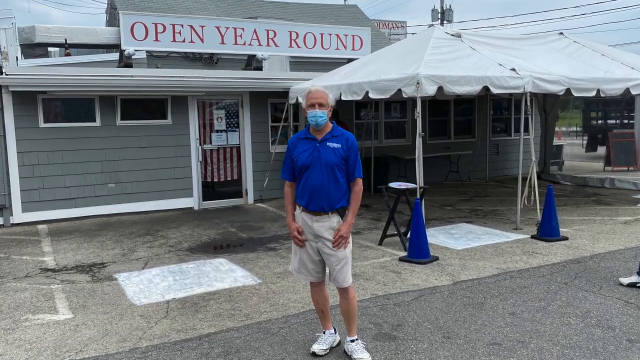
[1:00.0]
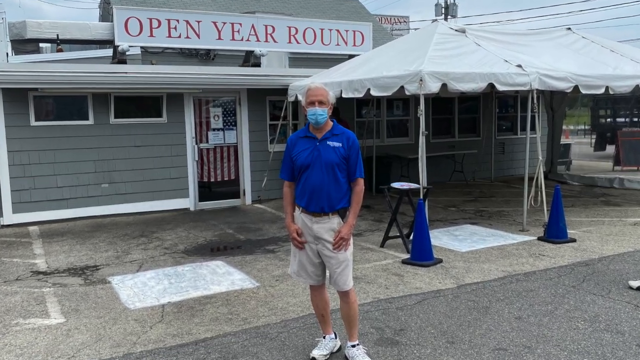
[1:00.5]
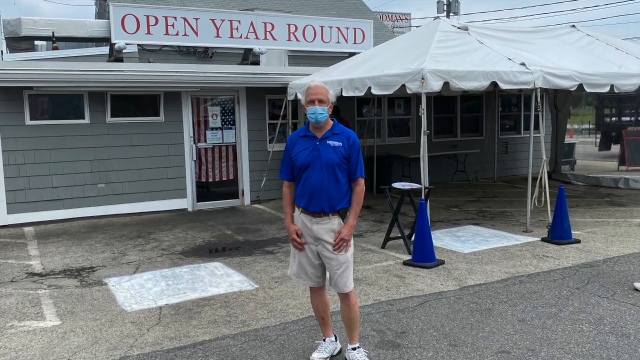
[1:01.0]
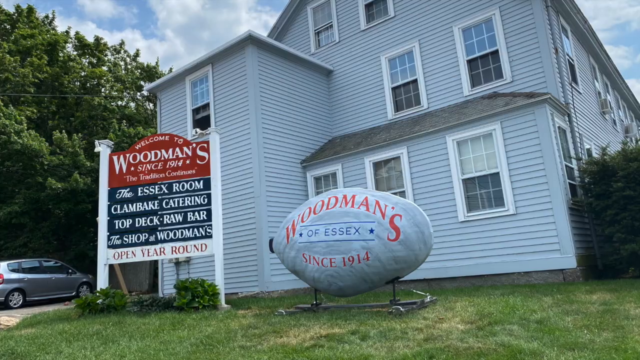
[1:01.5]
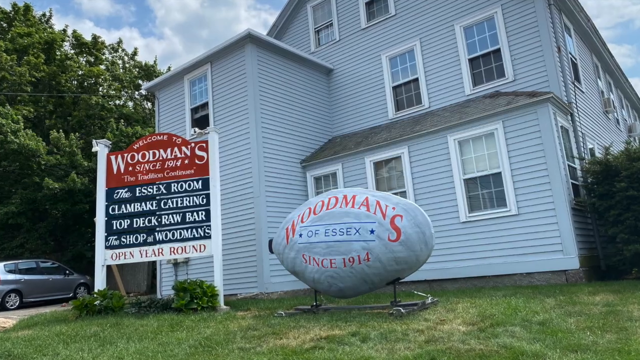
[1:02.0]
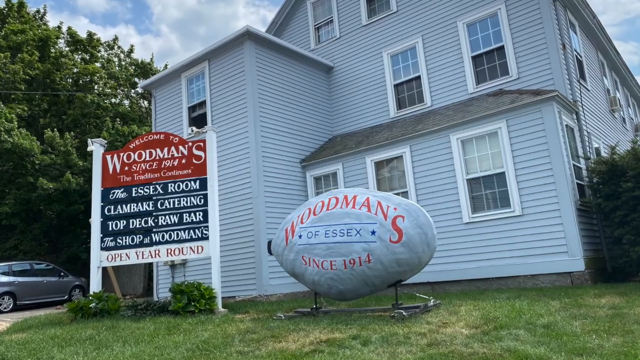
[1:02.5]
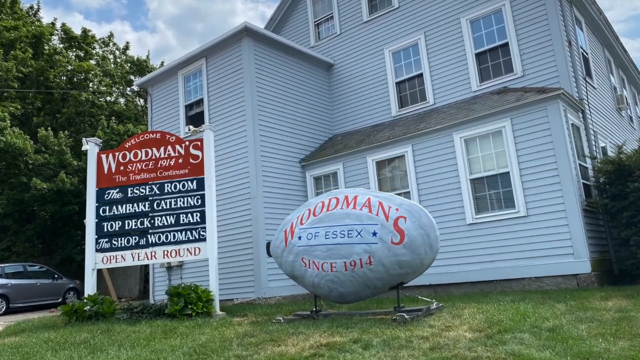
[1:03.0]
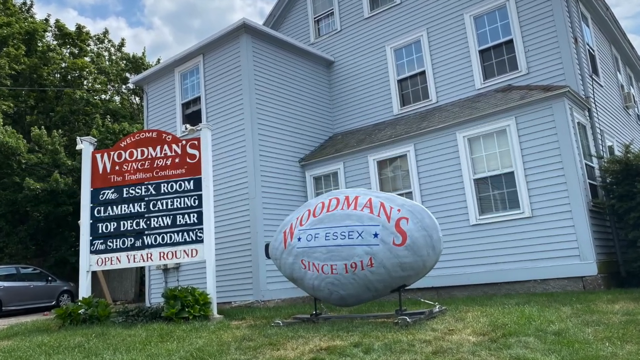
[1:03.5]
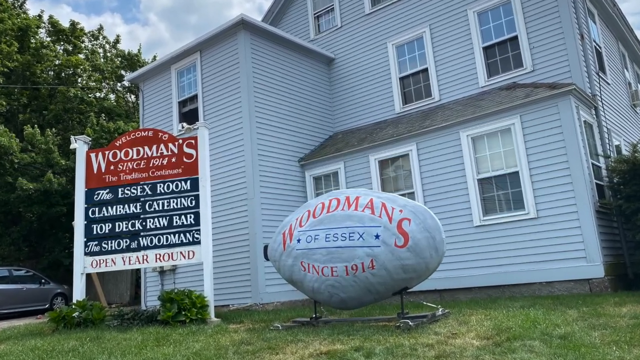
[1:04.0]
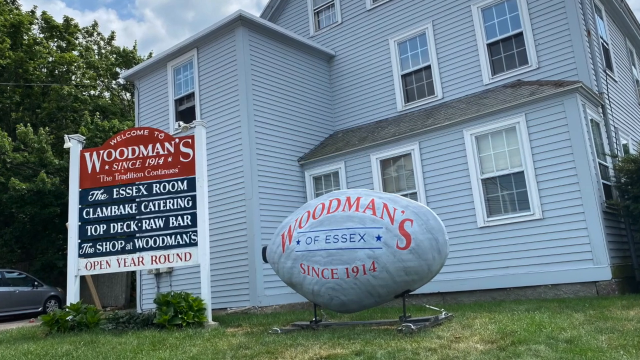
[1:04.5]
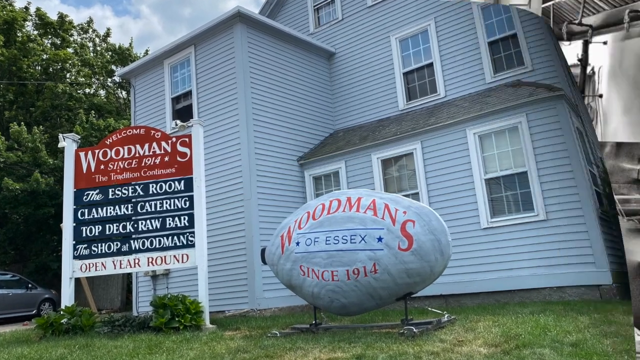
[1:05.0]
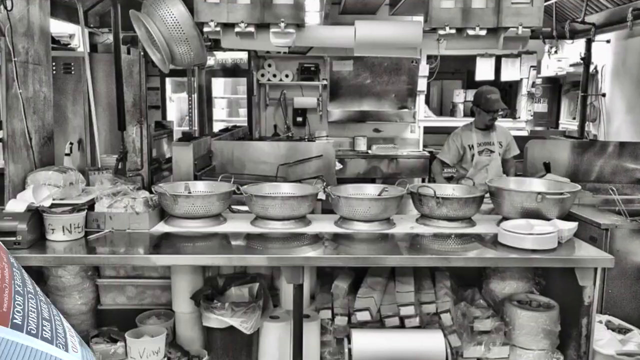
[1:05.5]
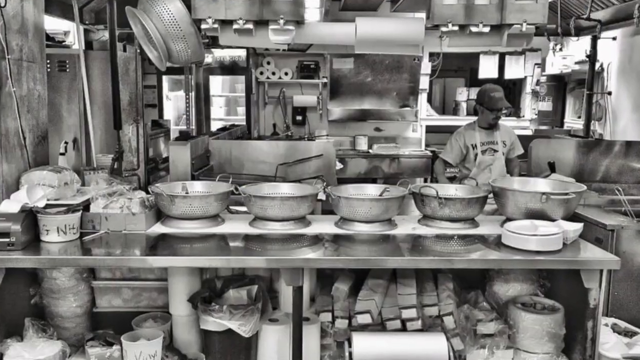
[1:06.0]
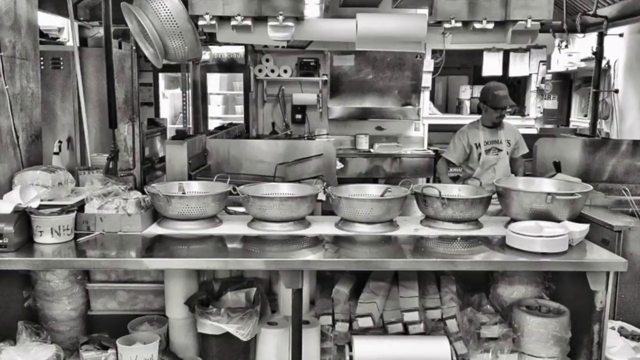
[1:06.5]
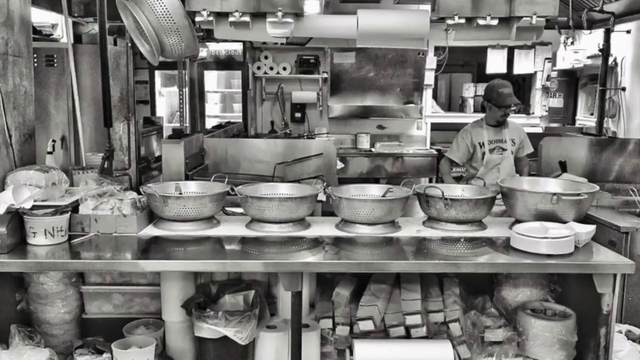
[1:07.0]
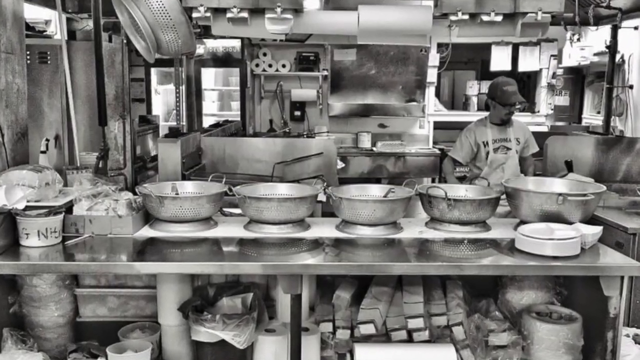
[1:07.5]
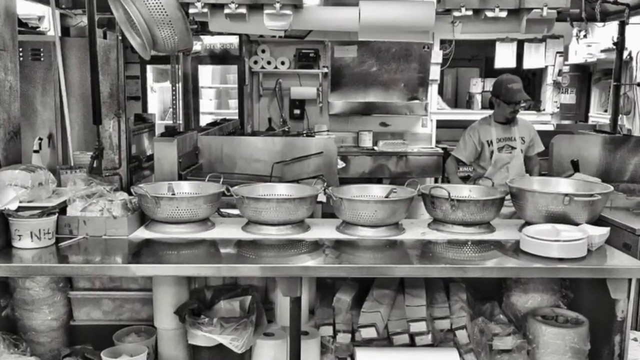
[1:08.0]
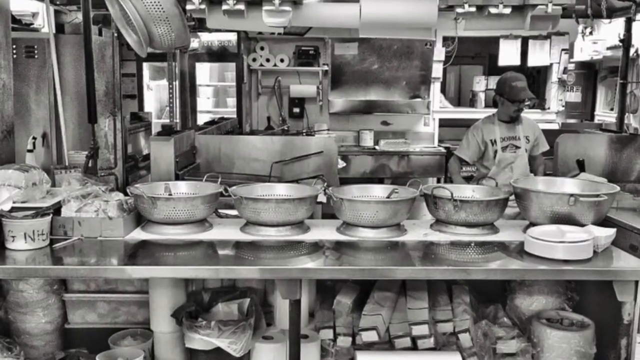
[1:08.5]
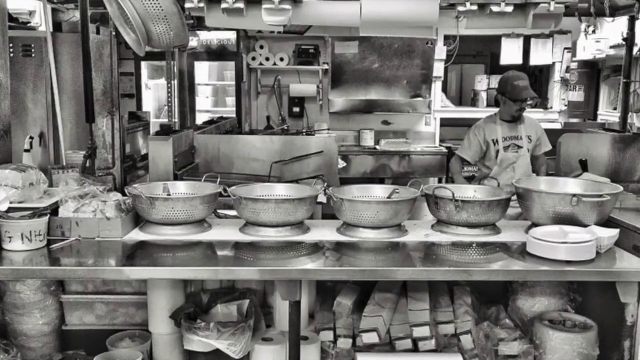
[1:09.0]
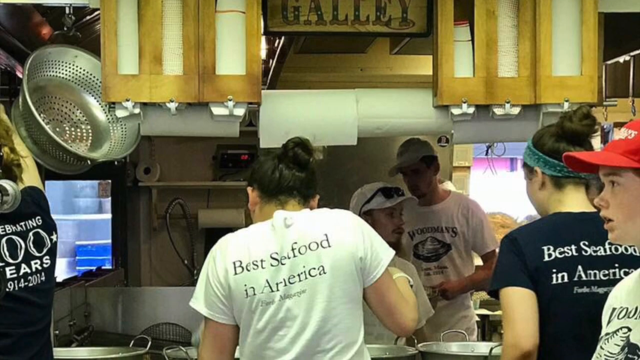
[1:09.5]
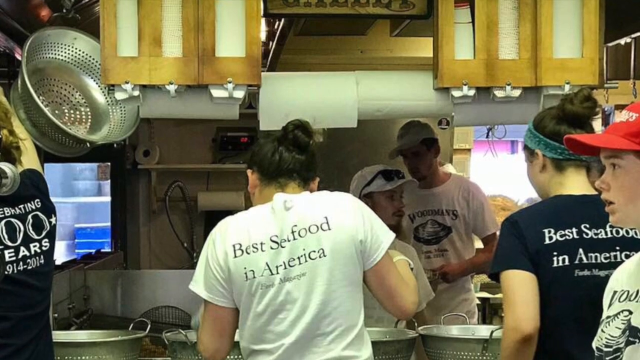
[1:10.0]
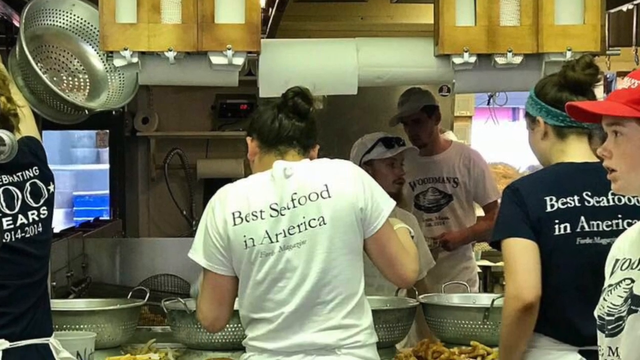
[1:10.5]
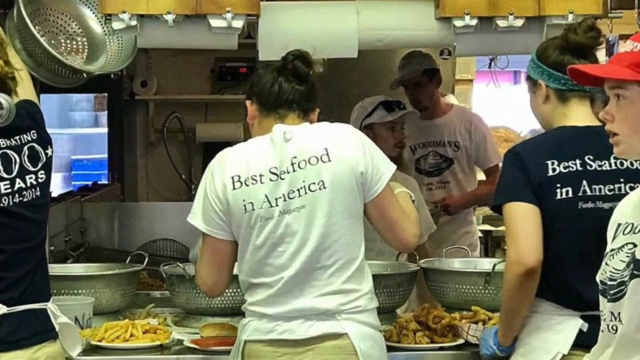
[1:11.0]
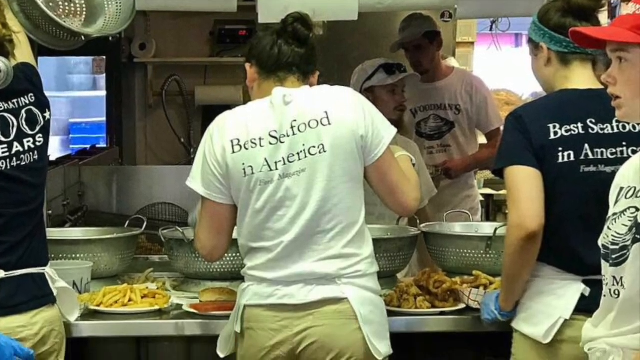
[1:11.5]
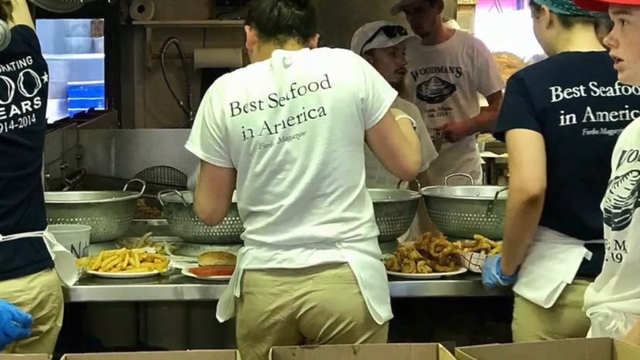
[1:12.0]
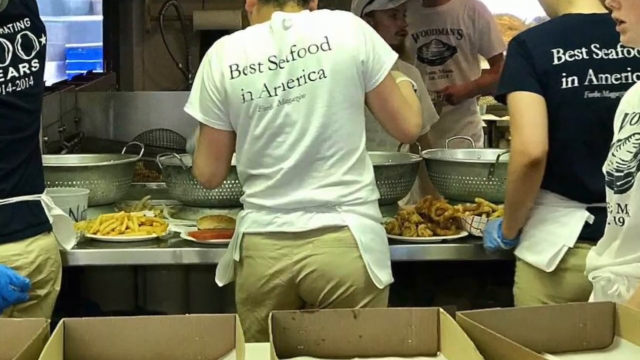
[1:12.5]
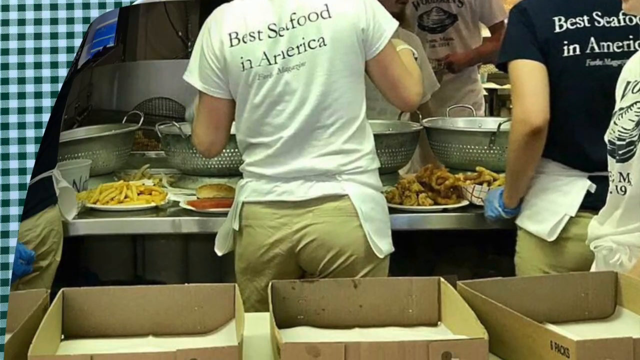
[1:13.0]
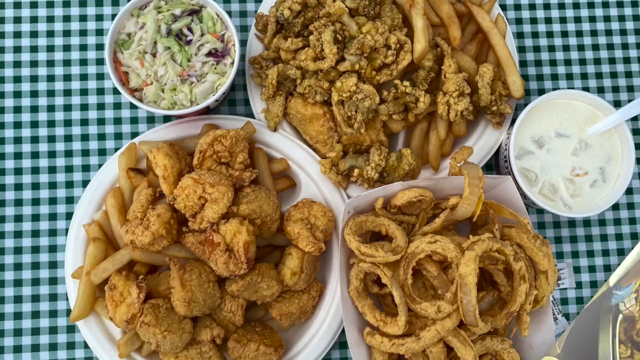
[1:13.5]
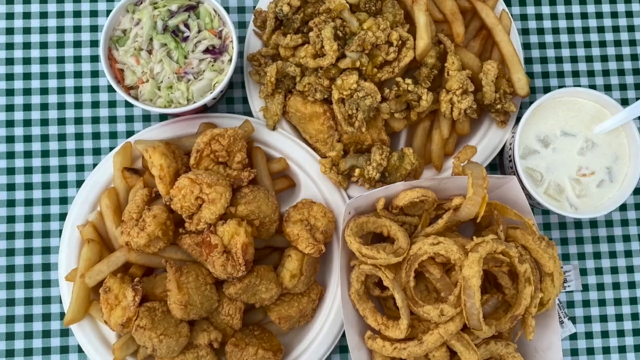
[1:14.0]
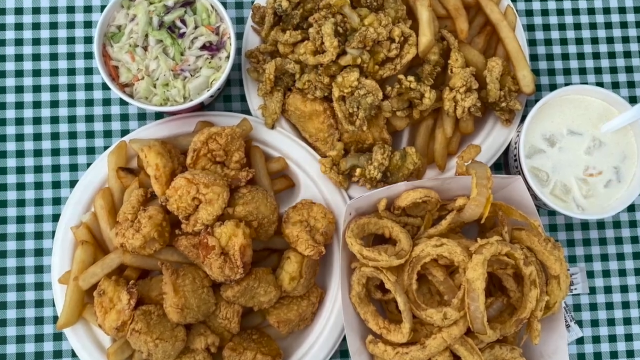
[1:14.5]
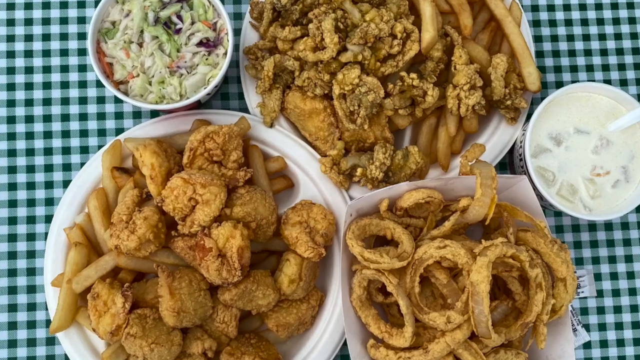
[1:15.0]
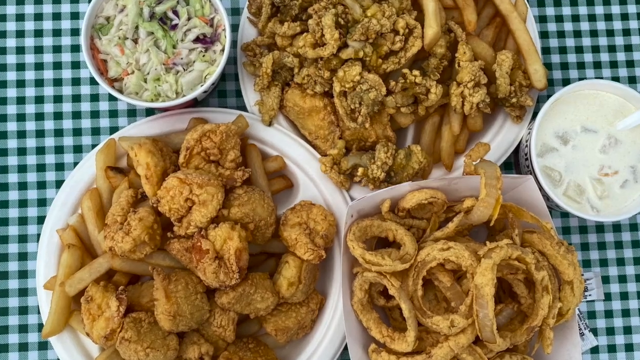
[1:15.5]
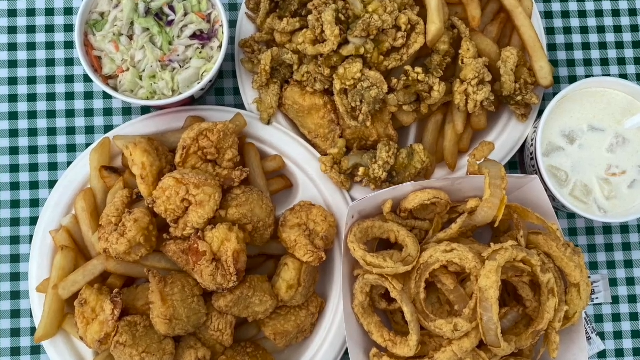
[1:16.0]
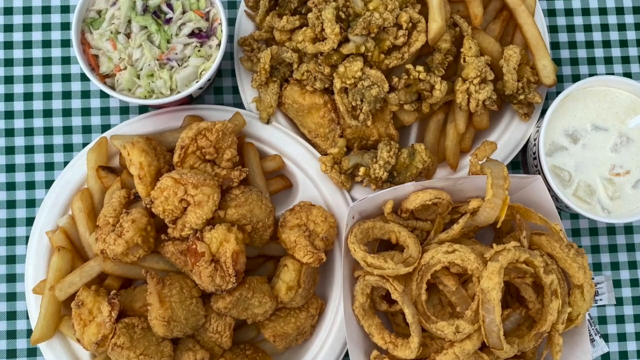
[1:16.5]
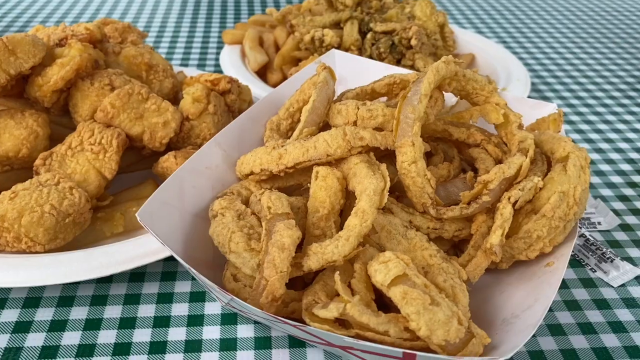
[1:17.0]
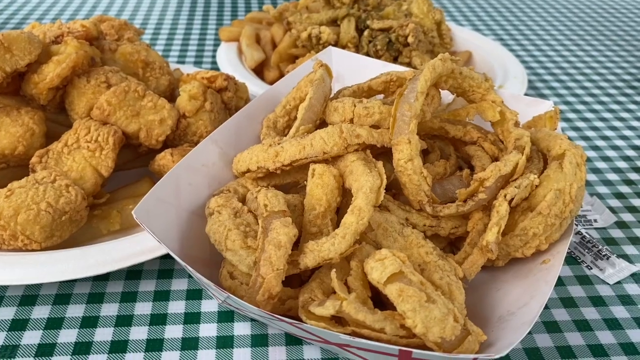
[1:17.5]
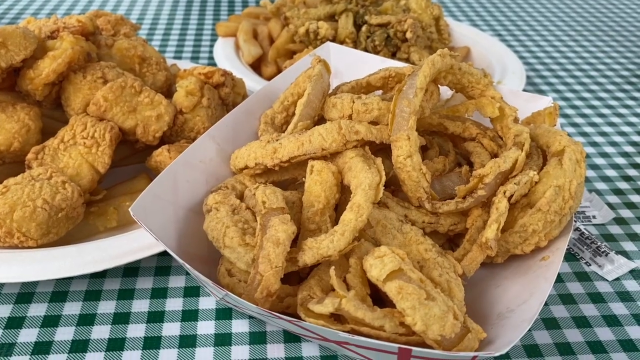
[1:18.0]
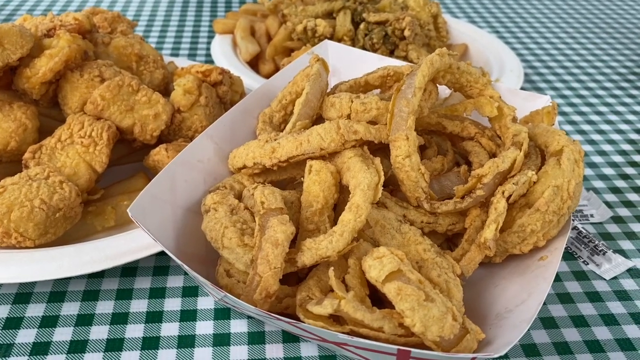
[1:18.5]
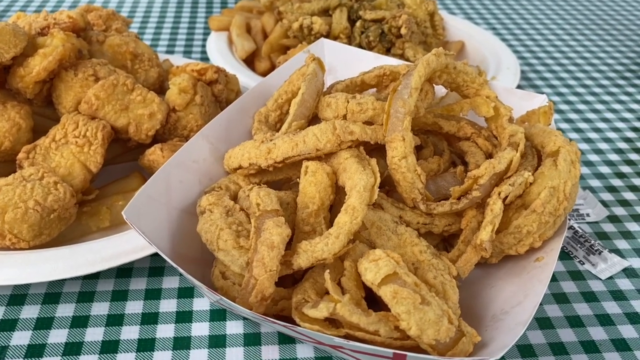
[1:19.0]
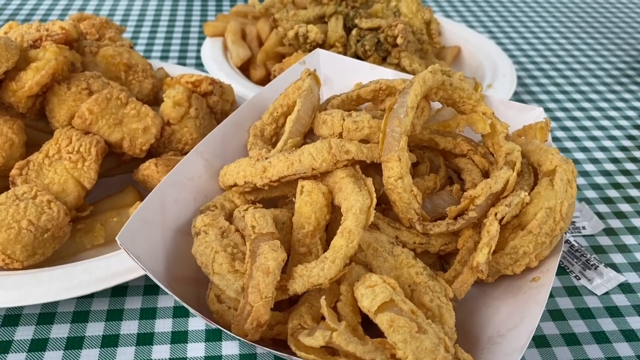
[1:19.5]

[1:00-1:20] What is apparently the current building is wooden-looking, with grey cladding and white rims. A sign on top says "Open Year Round" in red letters on a white background, there is a big white umbrella or awning, and a couple of blue traffic cones are to the right of the screen. A tall, bald man stands outside, wearing a surgical face mask, a royal blue t-shirt and white trainers. Next is a shot of another building, which looks like a three-storey wooden building, with a sign outside that says "Woodmans, since 1914" and also lists "Essex Room", "Clambake Catering", "Top Deck Raw Bar", "the shop at Woodmans" and "open year-round". A big round sign in front says "Woodmans of Essex". Then comes a black and white shot of a kitchen and some sort of view from the kitchen. Another shot shows the three plates of fried food from the opening, this time with a bowl of salad on the top left and what looks like a white drink with ice cubes on the right of the screen, and the camera zooms in for a close-up of the food.